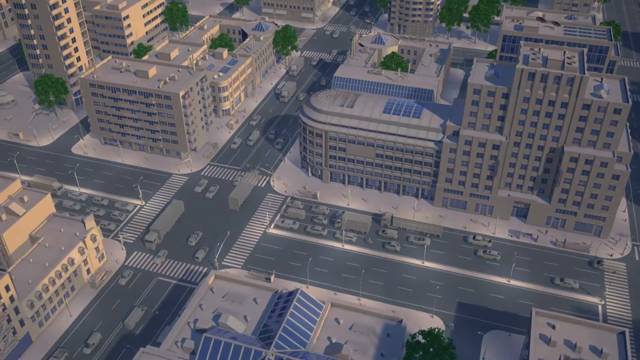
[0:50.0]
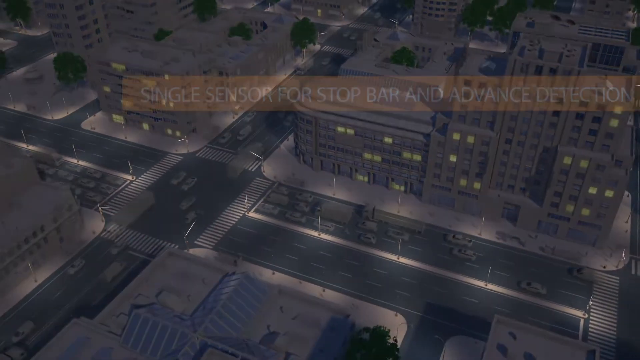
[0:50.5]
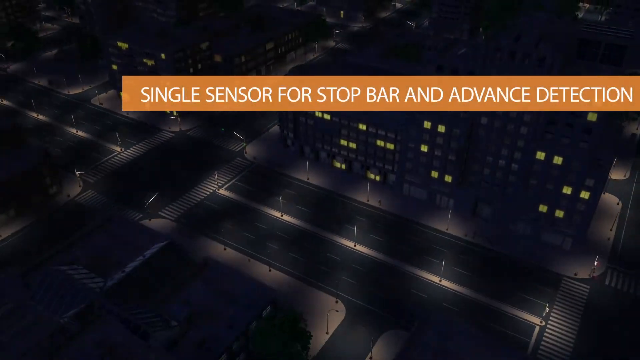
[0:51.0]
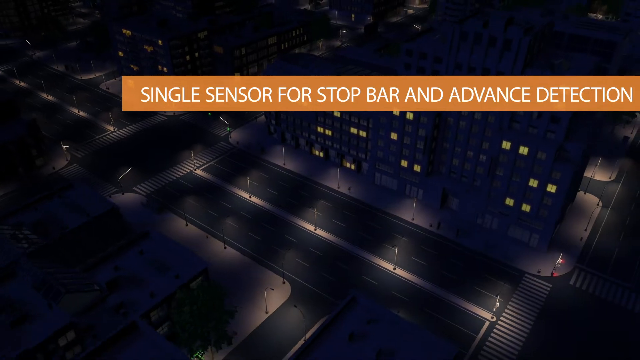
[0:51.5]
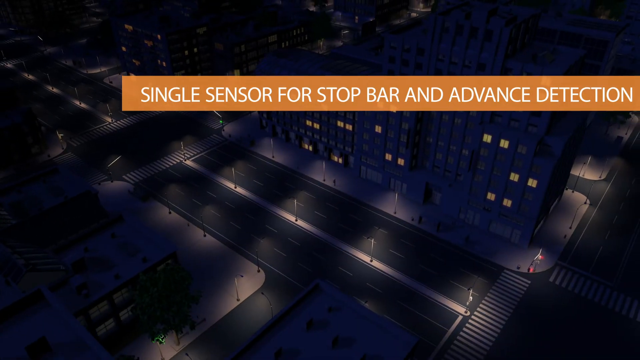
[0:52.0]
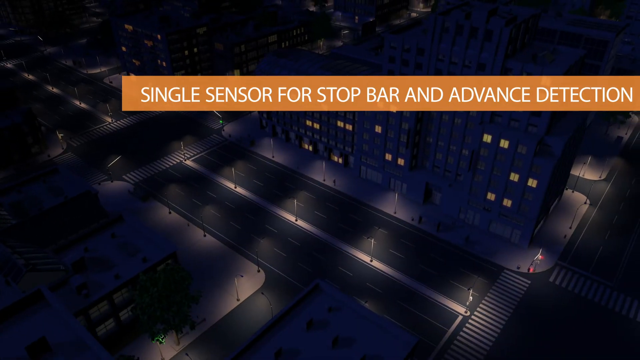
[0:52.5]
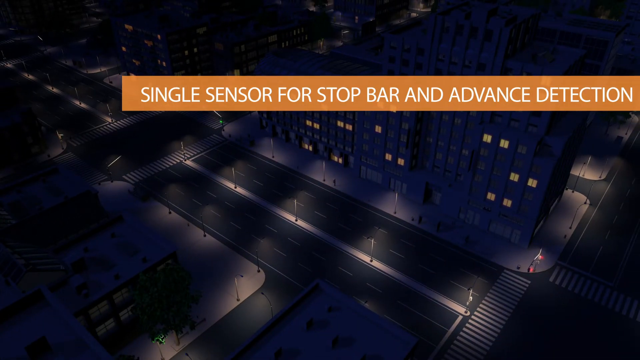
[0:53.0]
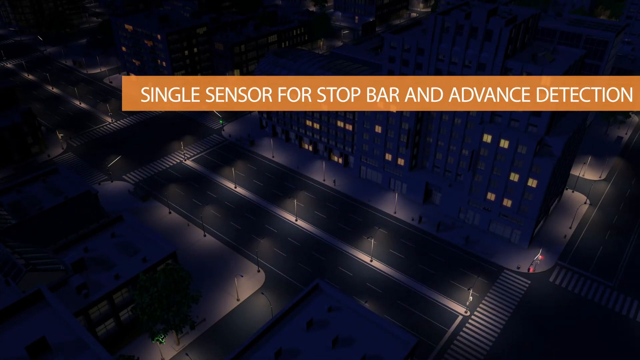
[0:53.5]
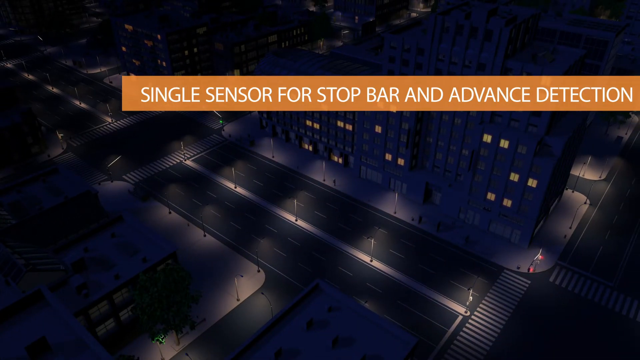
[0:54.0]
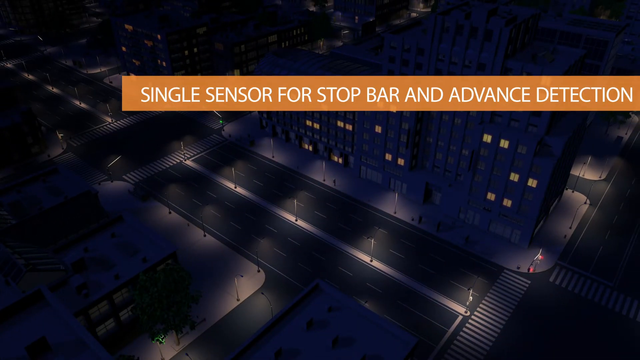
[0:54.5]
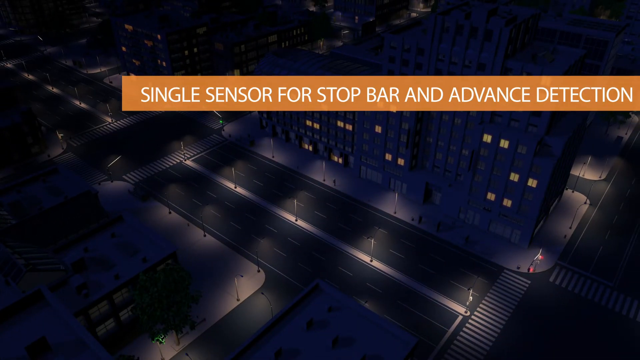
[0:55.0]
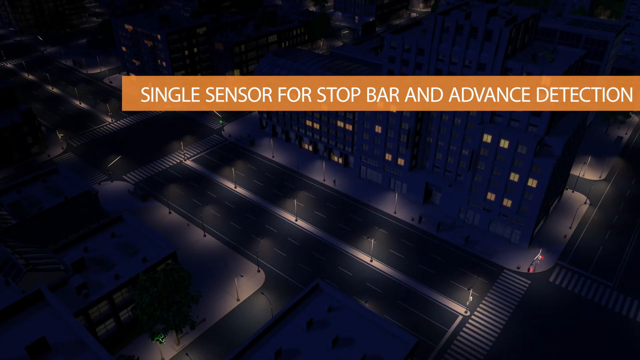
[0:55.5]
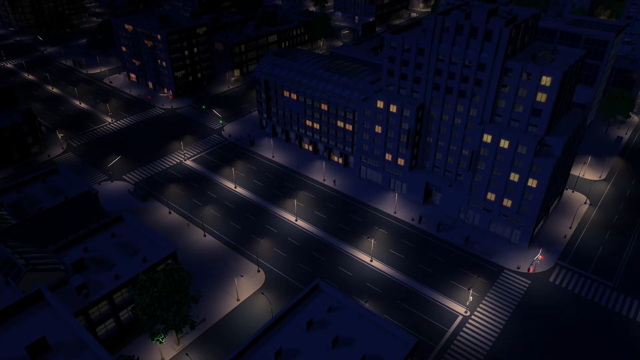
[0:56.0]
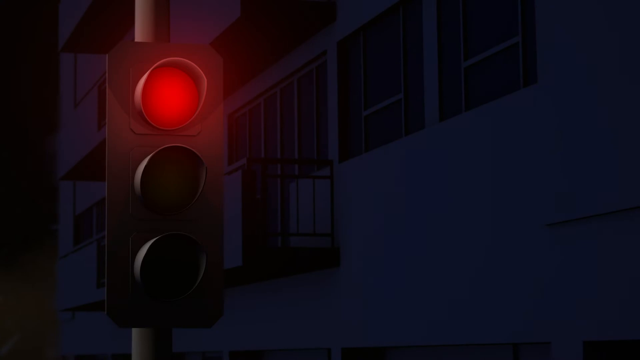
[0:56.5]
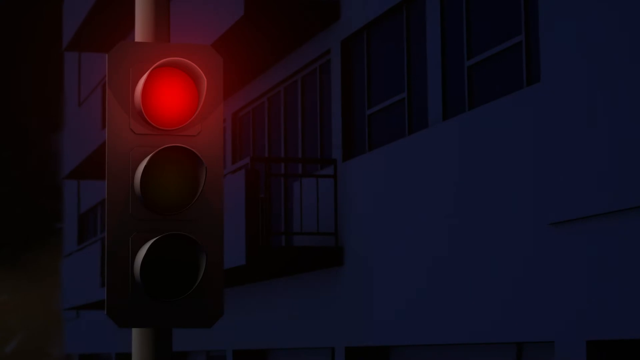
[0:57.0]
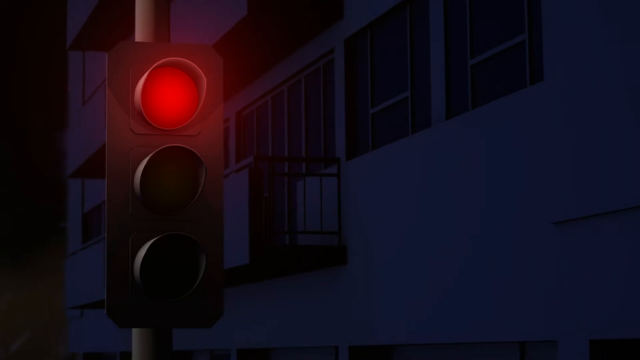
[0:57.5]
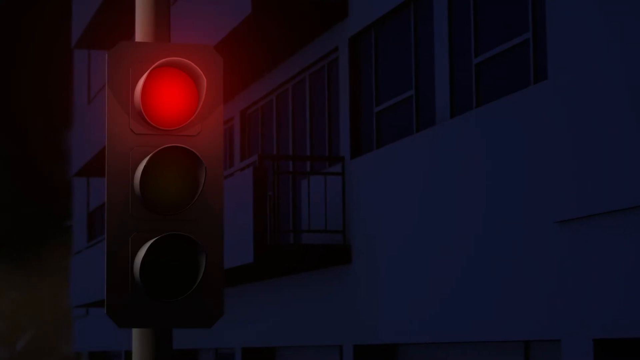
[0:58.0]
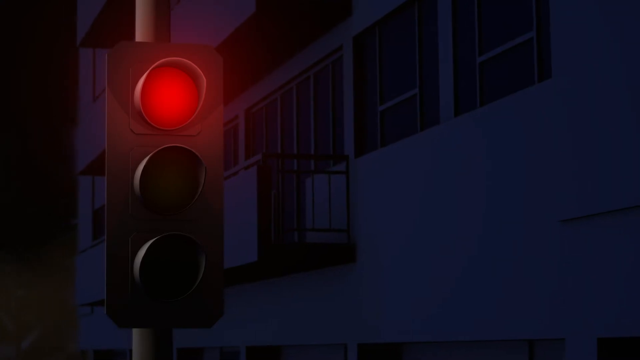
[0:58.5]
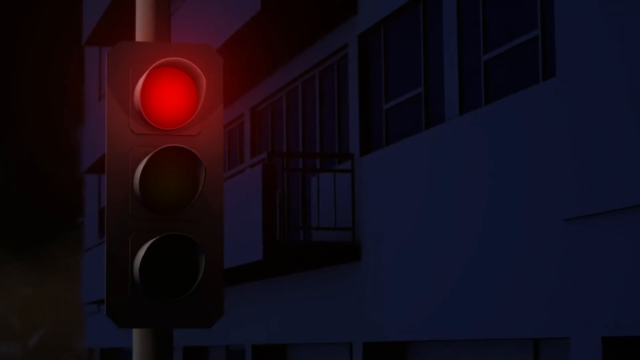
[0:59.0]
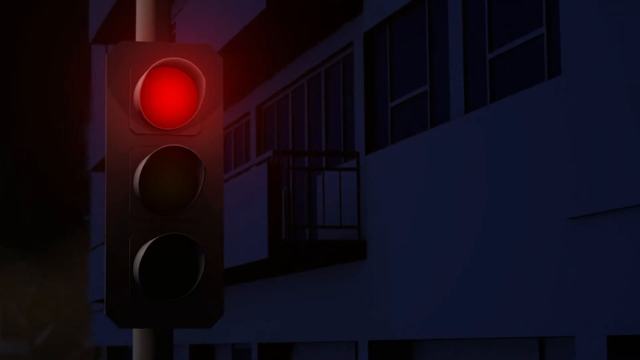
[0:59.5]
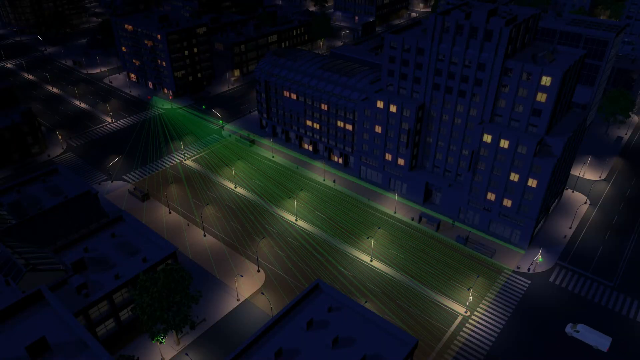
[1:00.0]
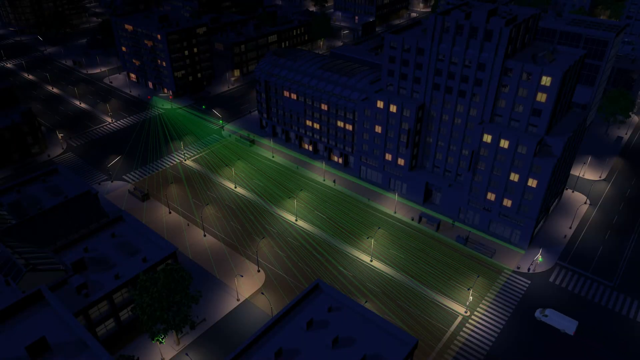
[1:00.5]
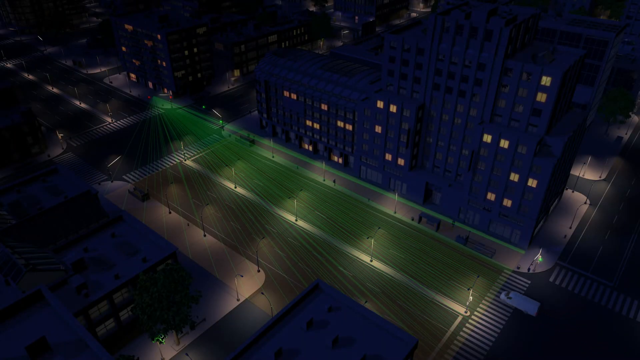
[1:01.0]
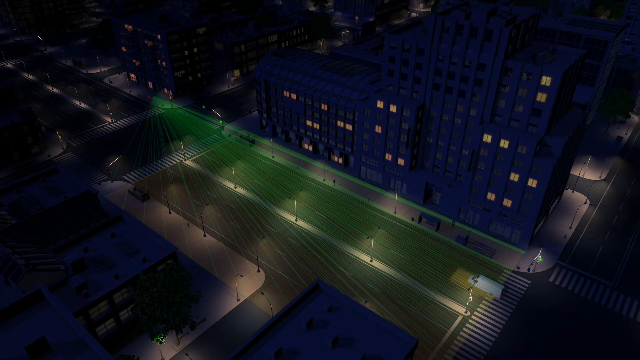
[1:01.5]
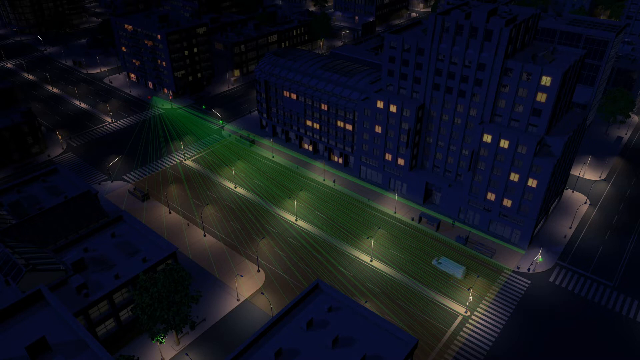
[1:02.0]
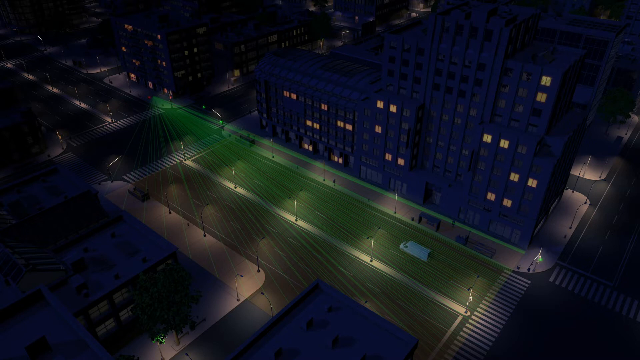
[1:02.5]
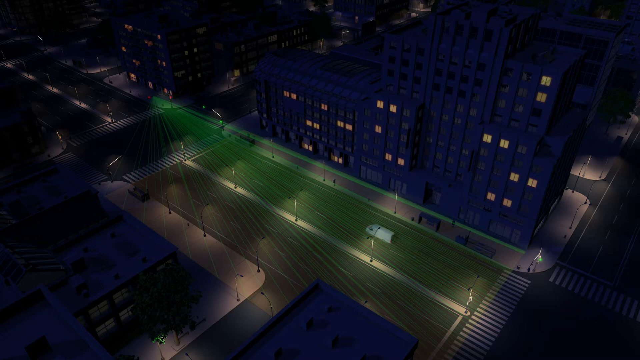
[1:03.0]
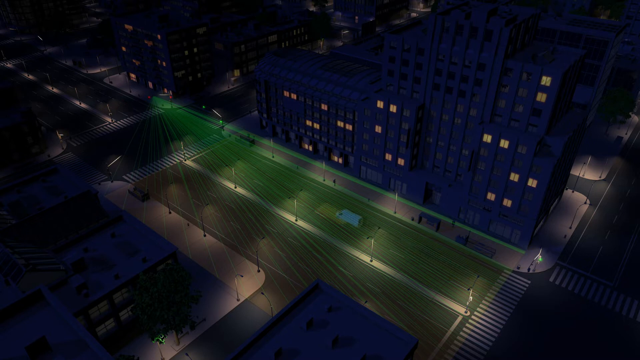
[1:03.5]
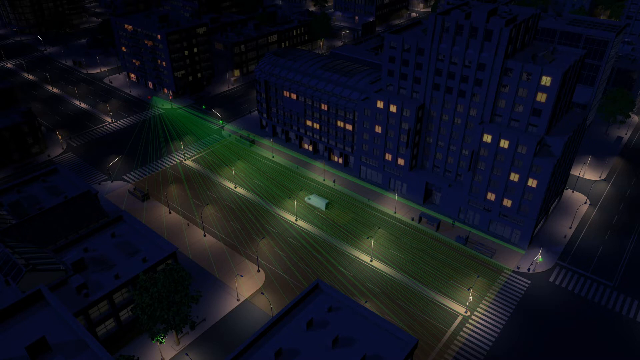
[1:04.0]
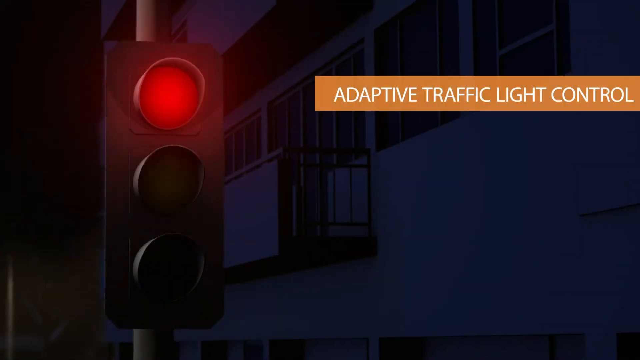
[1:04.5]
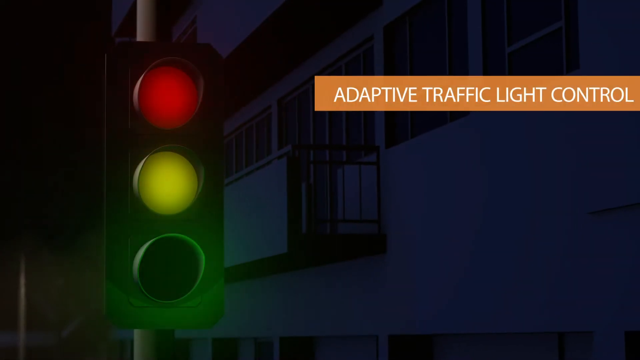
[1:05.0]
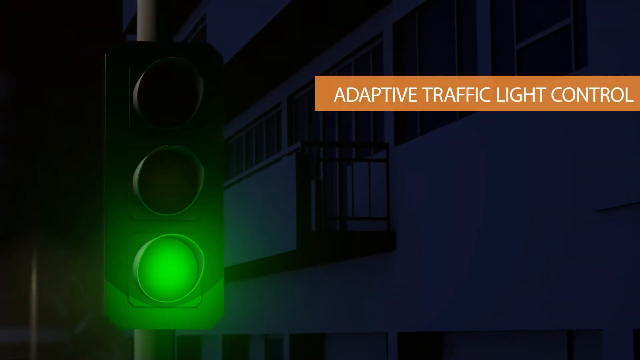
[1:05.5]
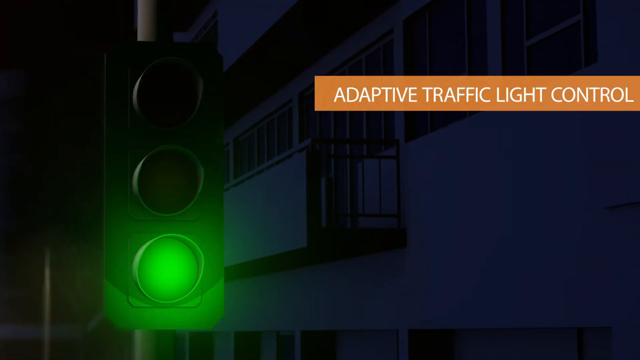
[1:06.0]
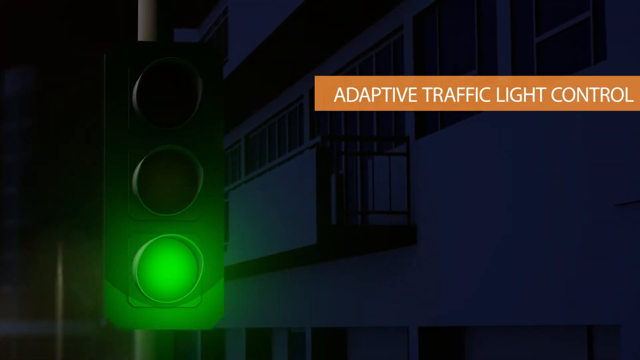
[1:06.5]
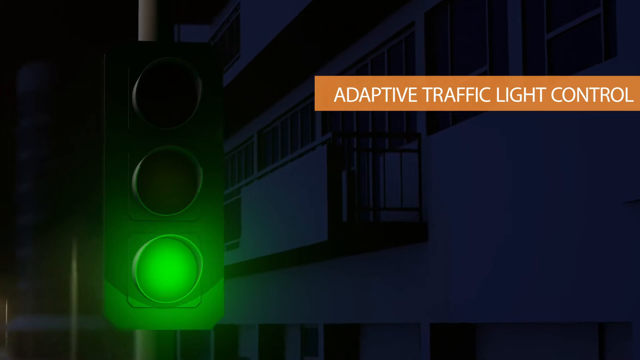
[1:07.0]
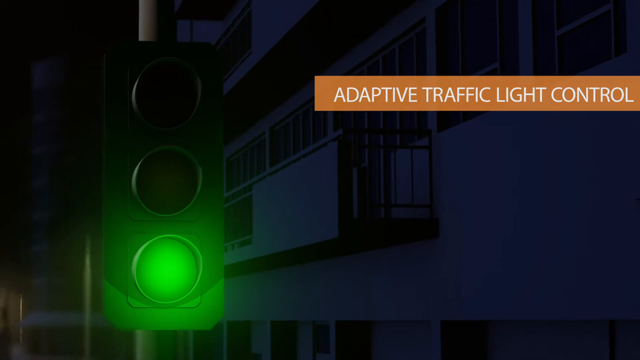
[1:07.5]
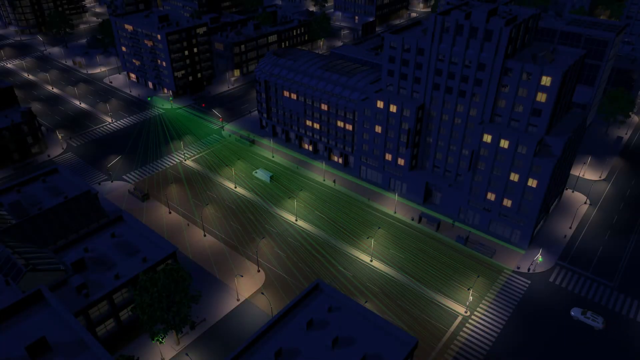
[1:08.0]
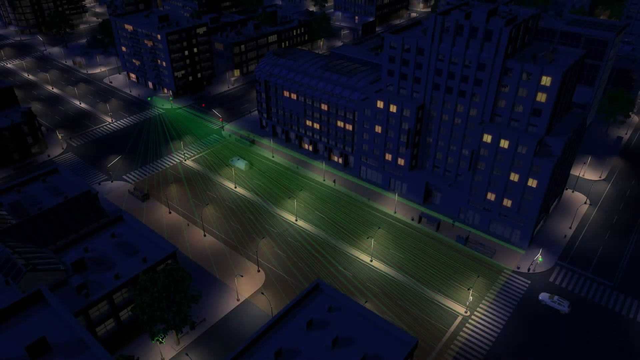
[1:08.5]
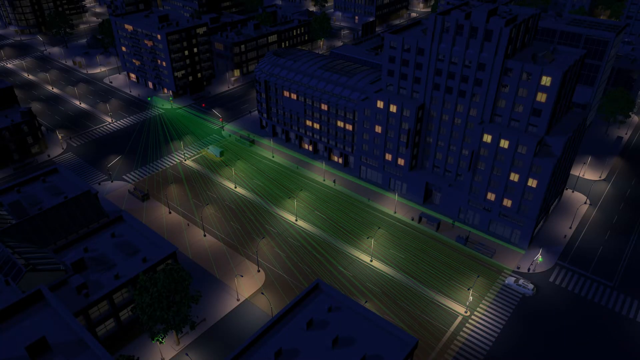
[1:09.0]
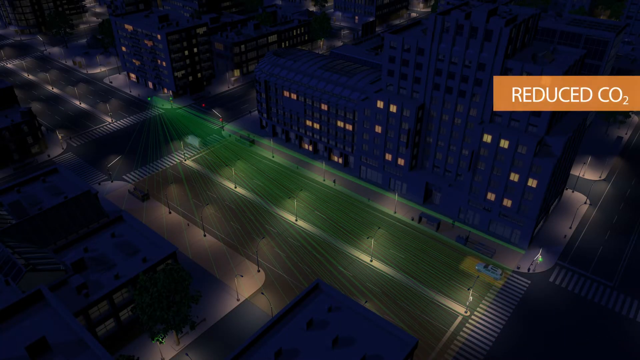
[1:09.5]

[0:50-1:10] The city comes into clearer view: the buildings are gray with blue windows, and all the vehicles are gray. Text reads "single sensor for stop bar and event detection." The city then appears at night, with street lights and lights inside some of the windows, apparently offices. A stop light showing red appears, and the sensor's little laser beams spread out far down the street and road toward upcoming traffic. Text reads "adaptive traffic light control sensors" and "Reduce co2."